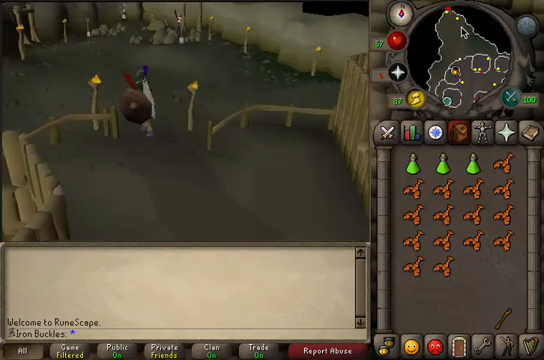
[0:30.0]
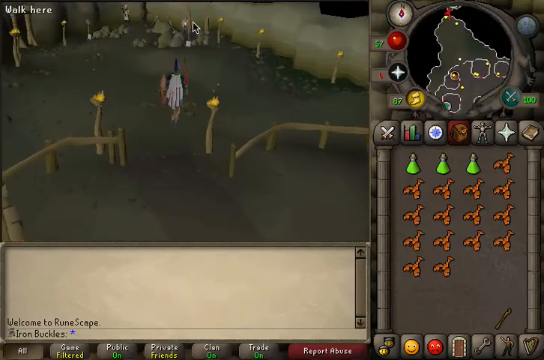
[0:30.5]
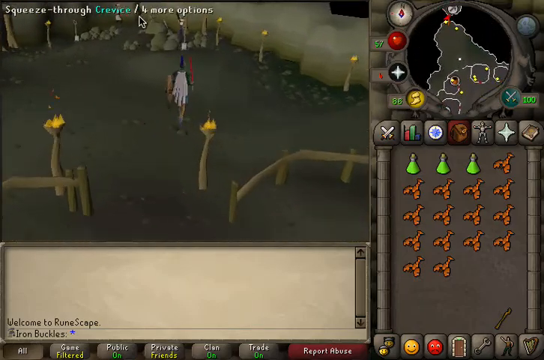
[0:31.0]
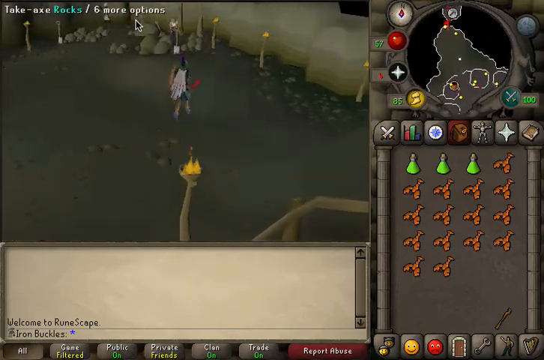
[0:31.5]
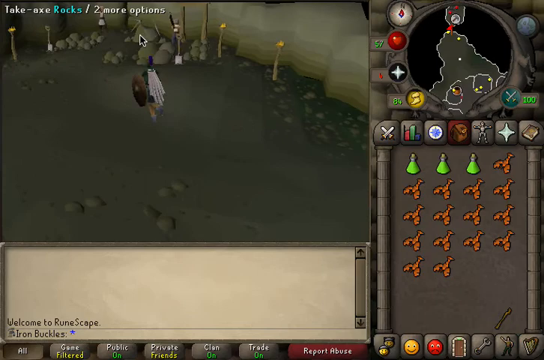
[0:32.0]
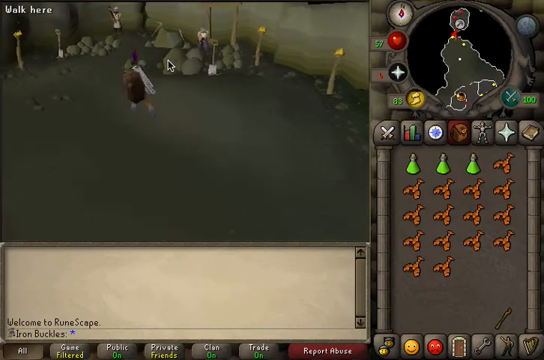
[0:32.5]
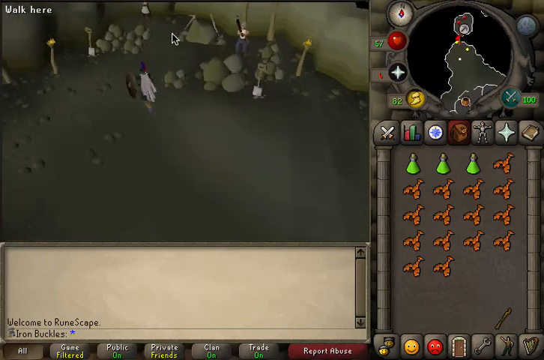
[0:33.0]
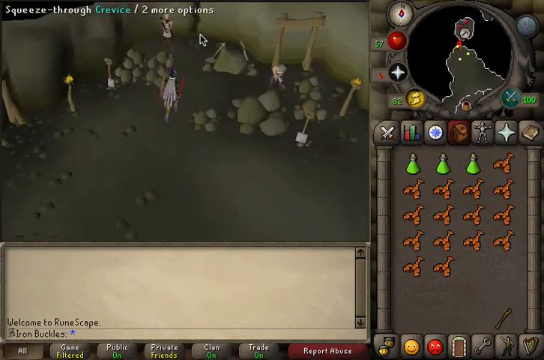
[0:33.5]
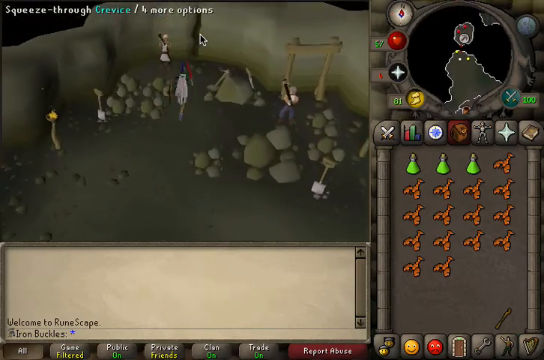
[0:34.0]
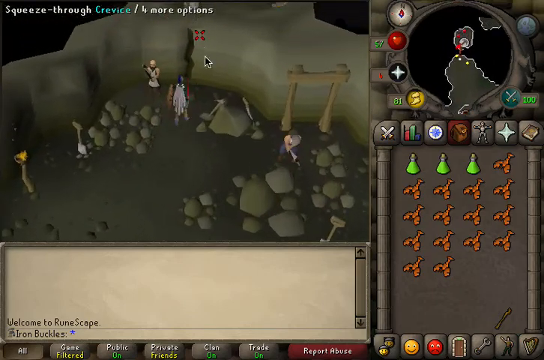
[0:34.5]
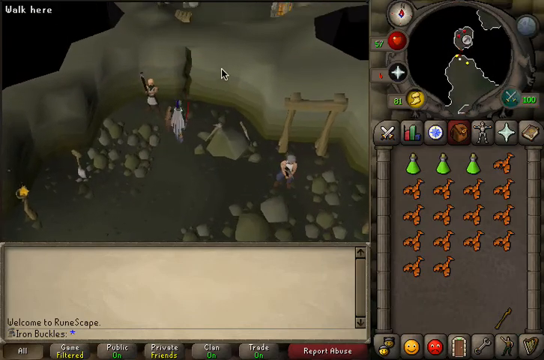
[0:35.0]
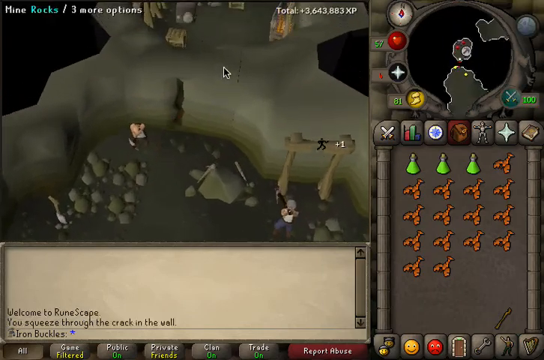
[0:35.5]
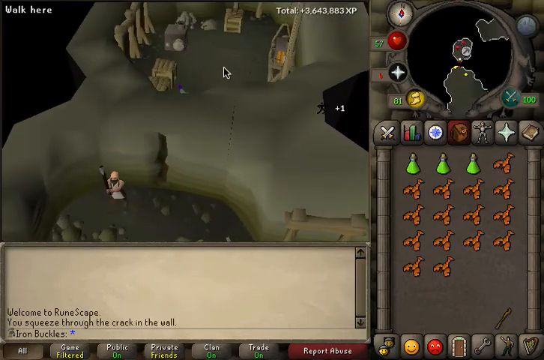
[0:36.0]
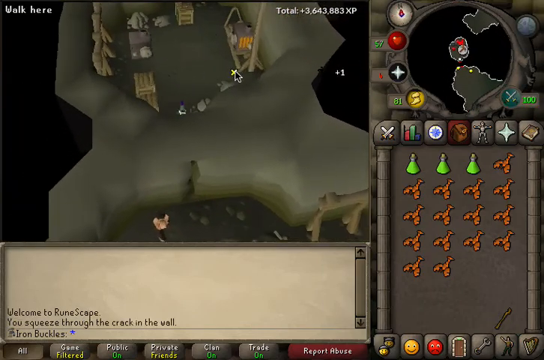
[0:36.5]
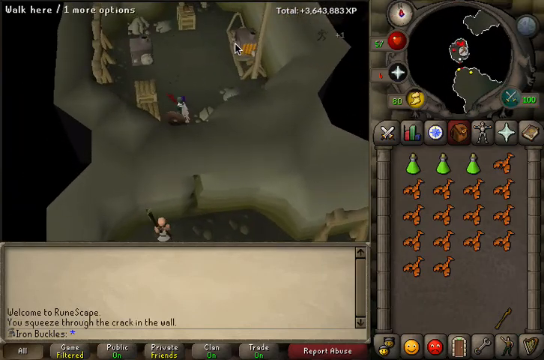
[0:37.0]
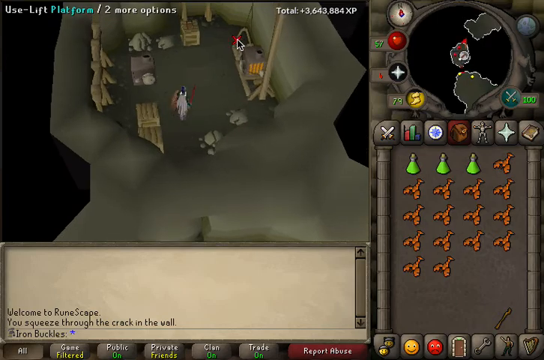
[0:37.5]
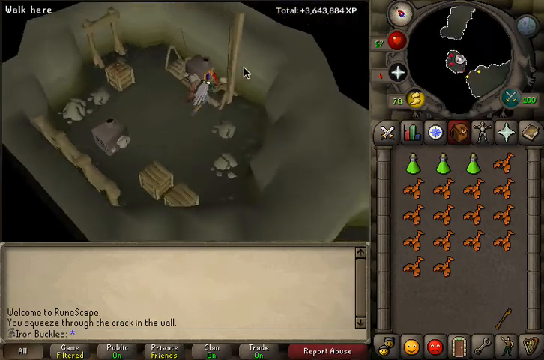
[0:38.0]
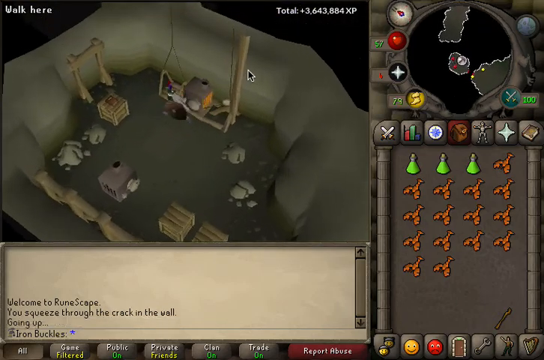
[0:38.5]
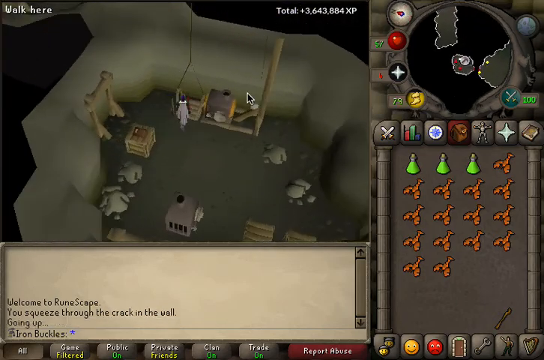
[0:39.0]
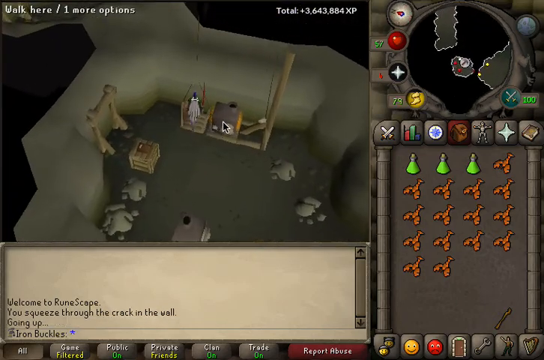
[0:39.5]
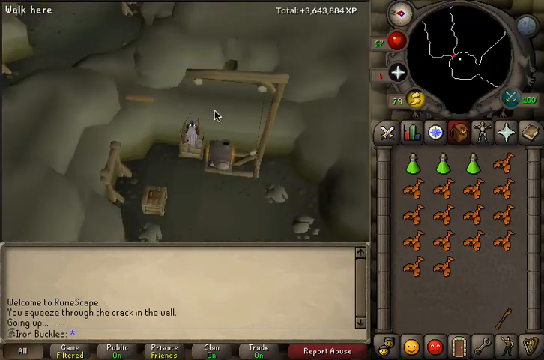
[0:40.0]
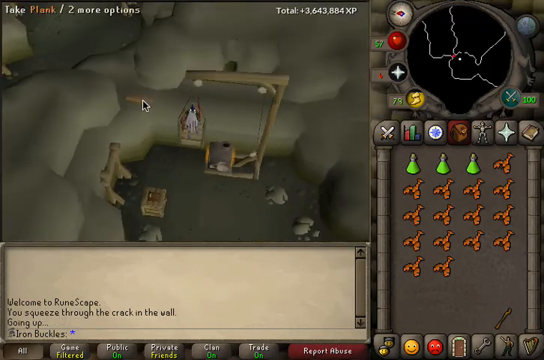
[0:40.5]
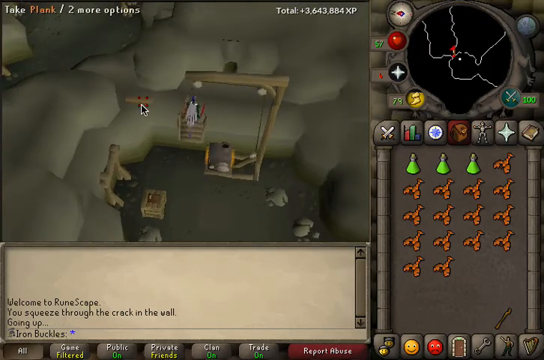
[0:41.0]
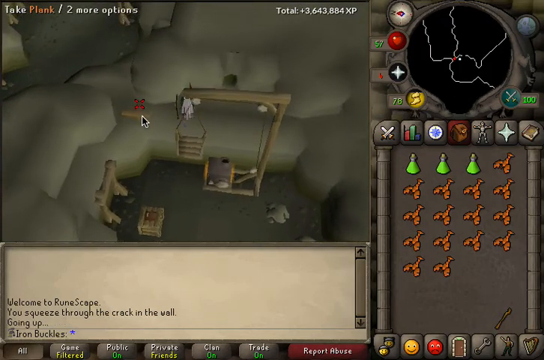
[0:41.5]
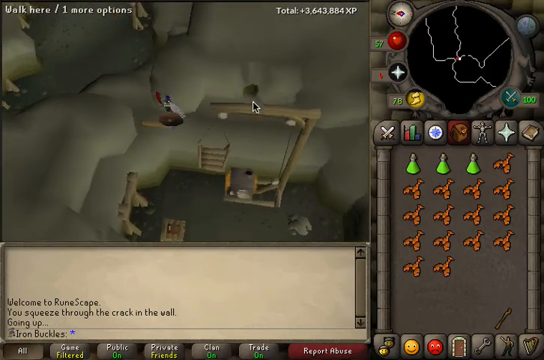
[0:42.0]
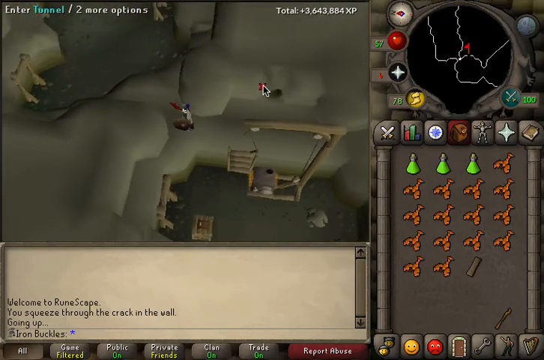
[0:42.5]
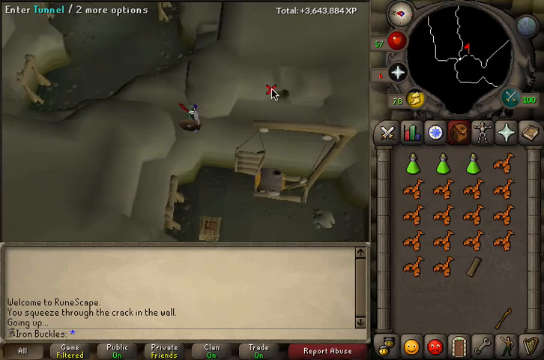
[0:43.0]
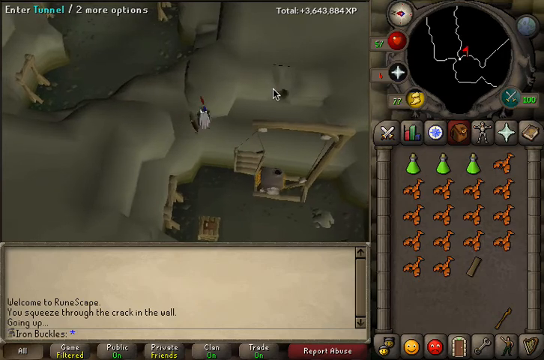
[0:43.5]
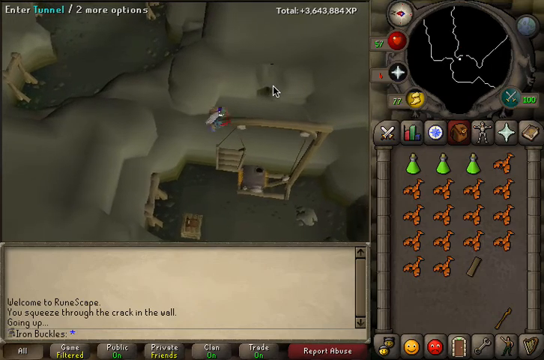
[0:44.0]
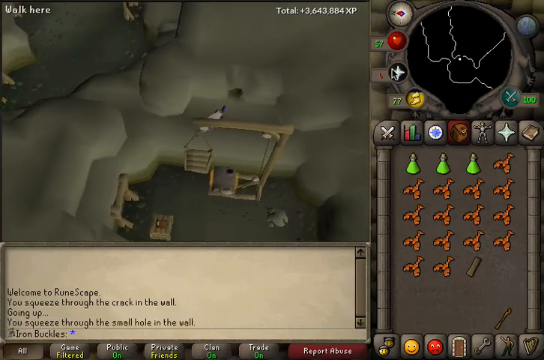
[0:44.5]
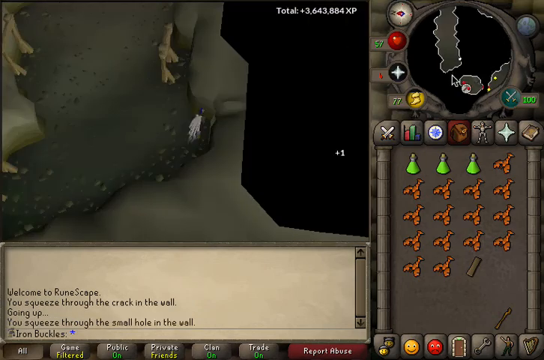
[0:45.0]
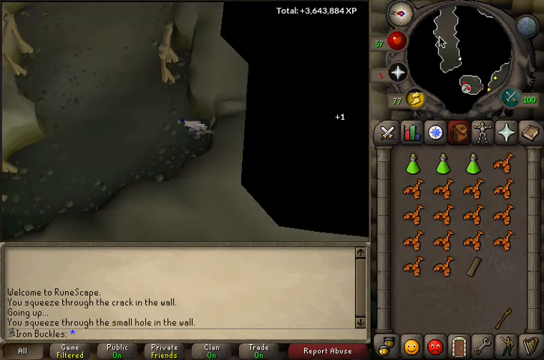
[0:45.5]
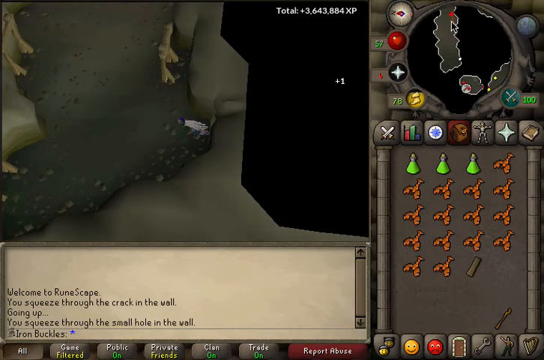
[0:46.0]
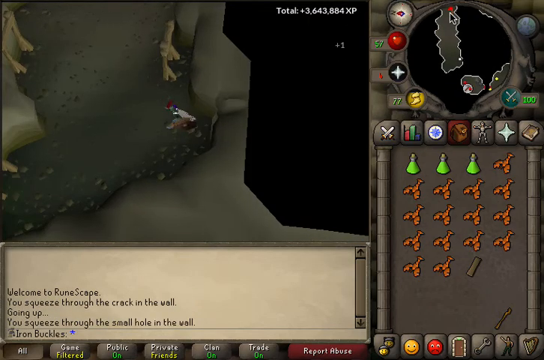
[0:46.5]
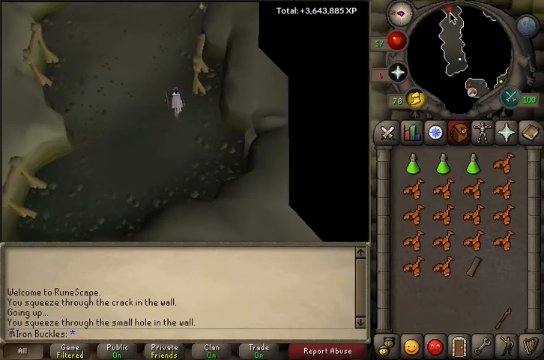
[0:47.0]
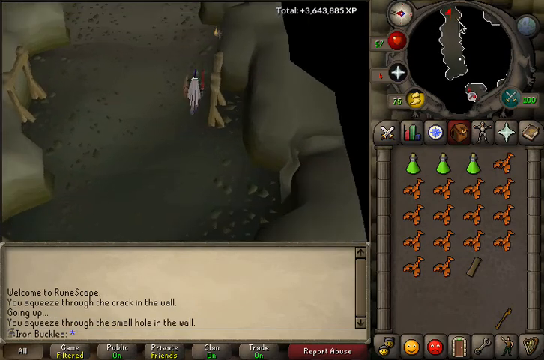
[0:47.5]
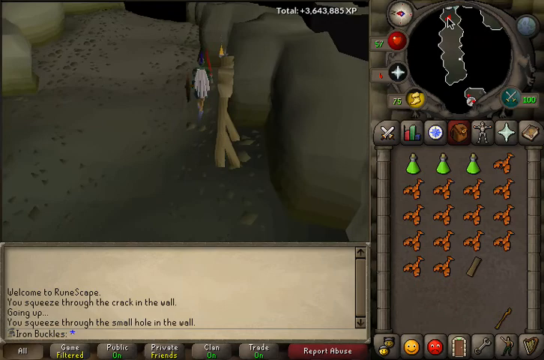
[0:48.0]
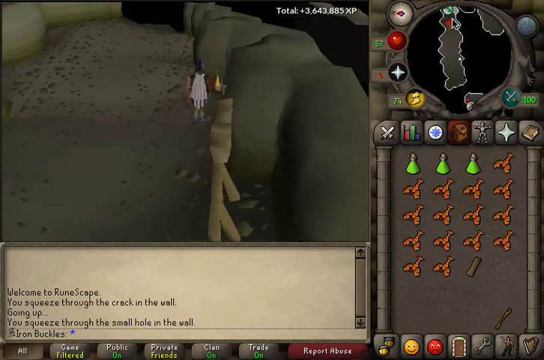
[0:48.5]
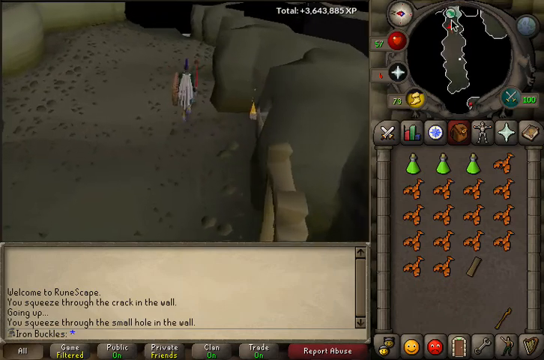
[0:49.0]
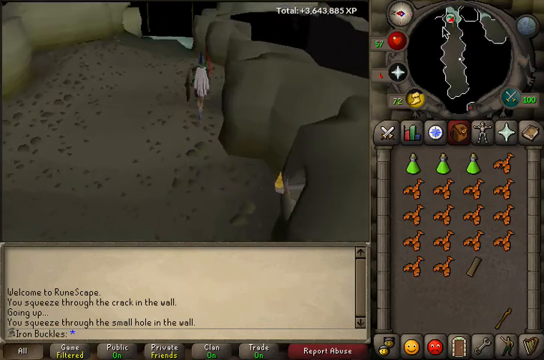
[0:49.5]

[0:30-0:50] The character is now seen in gameplay, moving around in what seems to be an overhead view. The character holds what seems to be a reddish sword and has a large circular shield. They head toward what seems to be a crack in the wall, make it through to another area or inside a cave, and take what looks like a wooden elevator to another floor inside the cave. There seem to be torches and posts around to light the way, and various other objects all look medieval, with no technology. The character walks toward what seems to be a dark, blank area, possibly unexplored, since there aren't really any items shown on the HUD map in the right-hand corner. The mouse pointer points up in a certain direction for the character to go.